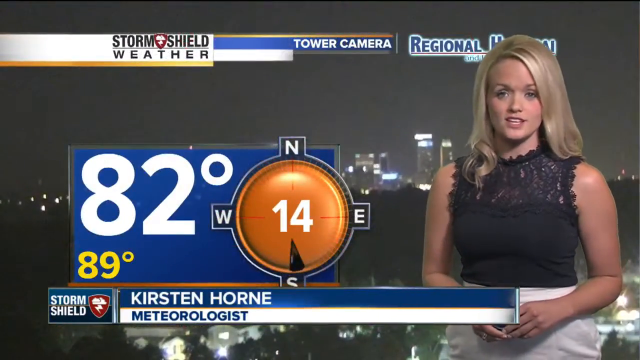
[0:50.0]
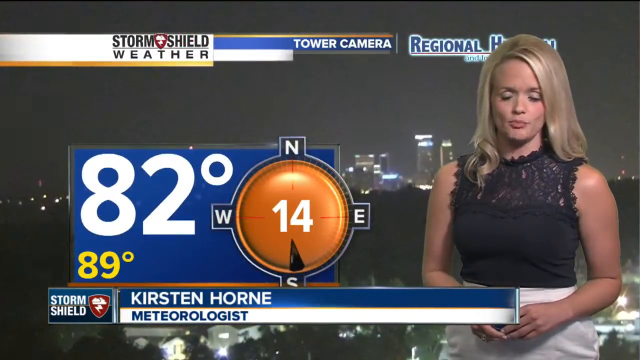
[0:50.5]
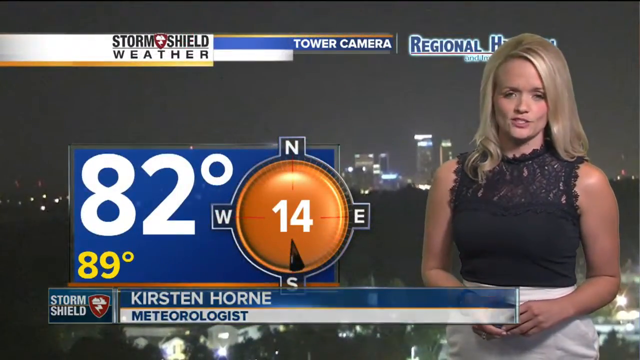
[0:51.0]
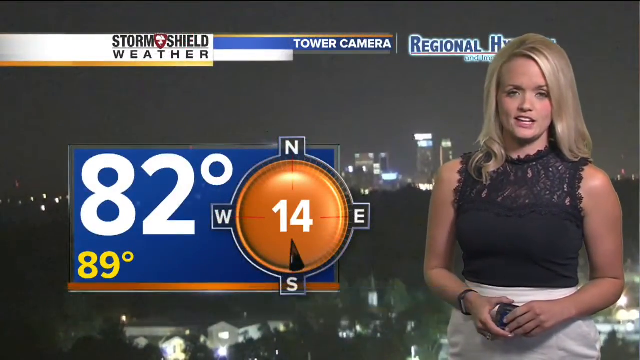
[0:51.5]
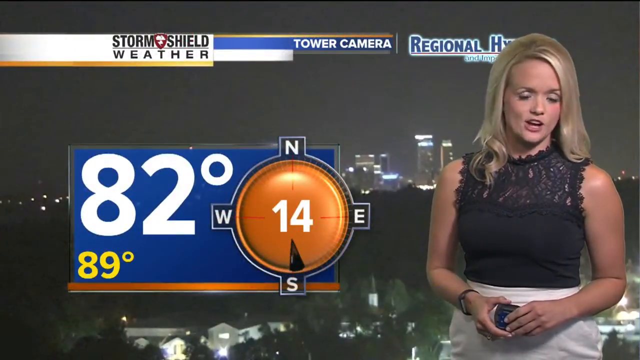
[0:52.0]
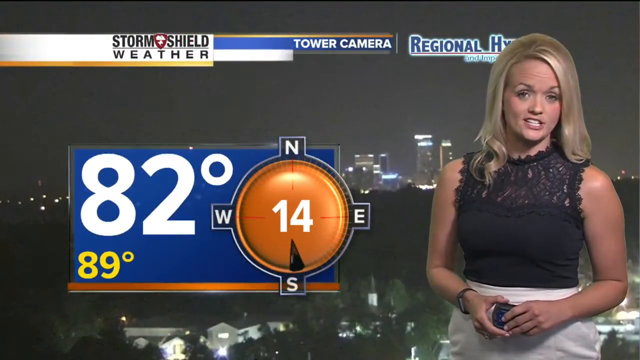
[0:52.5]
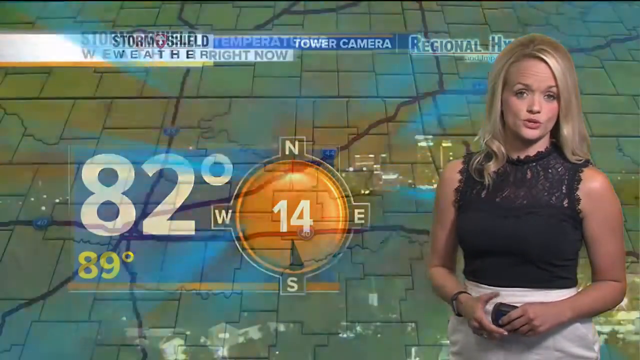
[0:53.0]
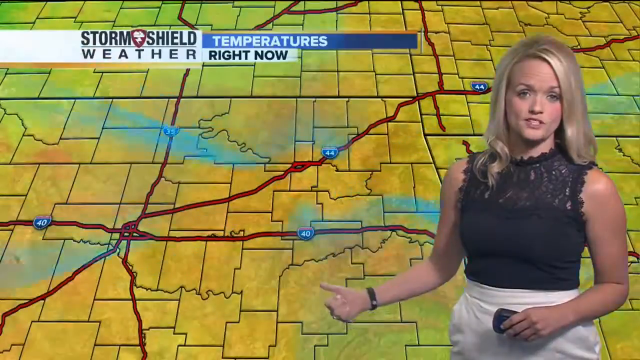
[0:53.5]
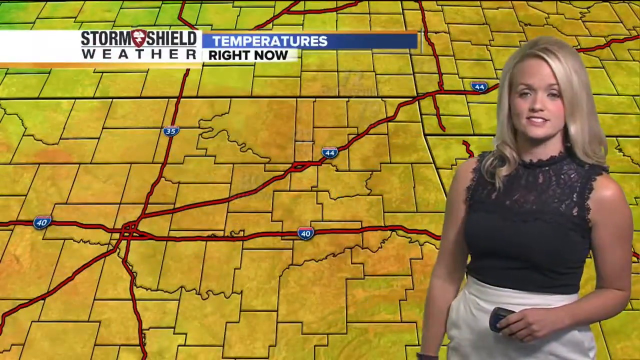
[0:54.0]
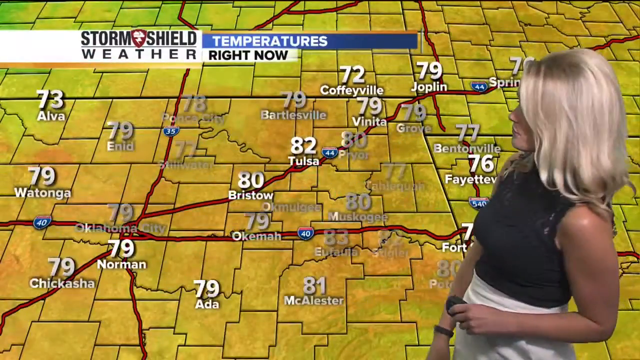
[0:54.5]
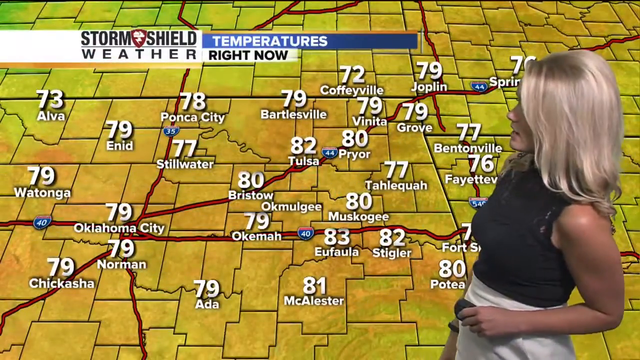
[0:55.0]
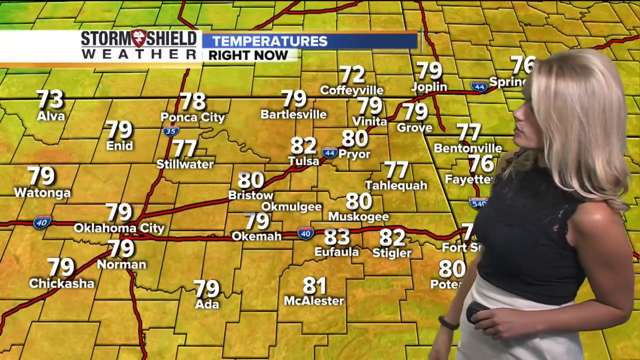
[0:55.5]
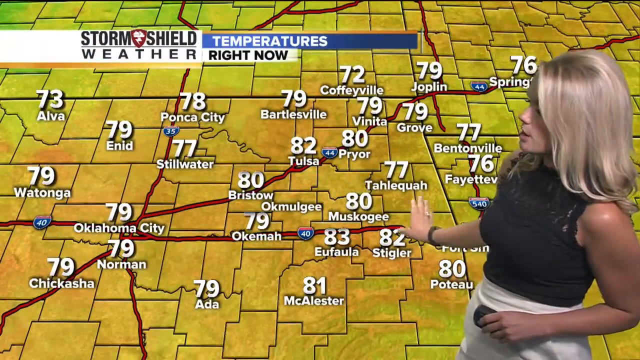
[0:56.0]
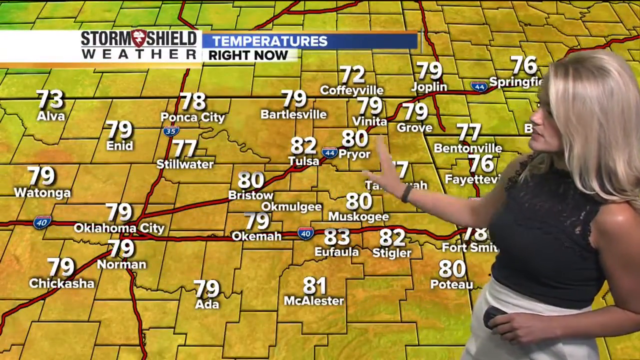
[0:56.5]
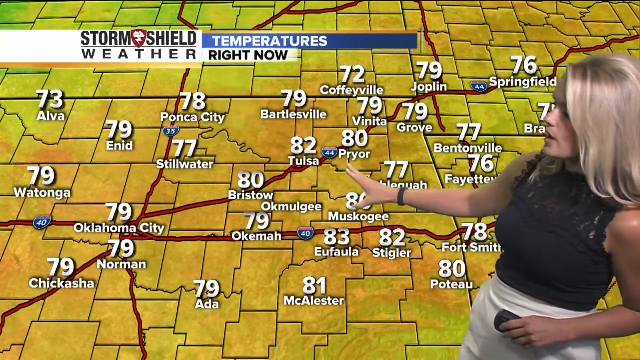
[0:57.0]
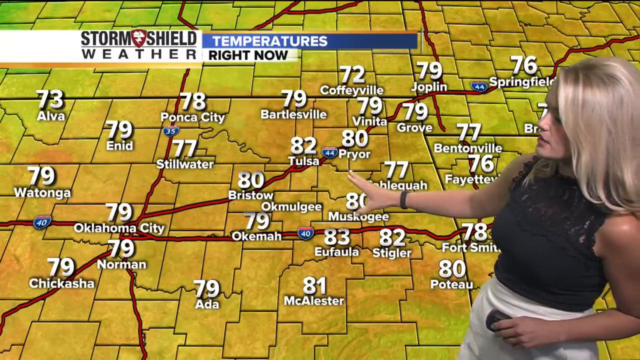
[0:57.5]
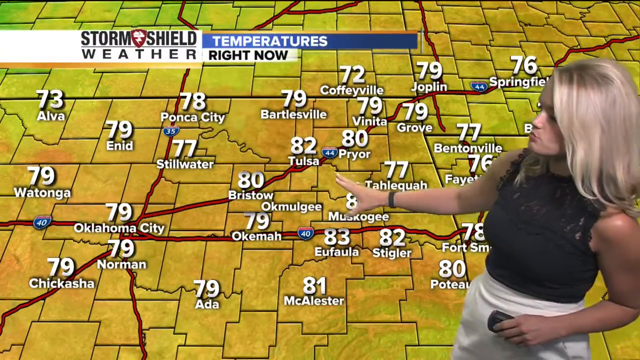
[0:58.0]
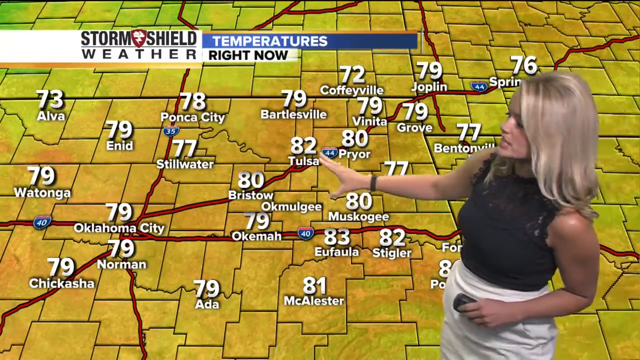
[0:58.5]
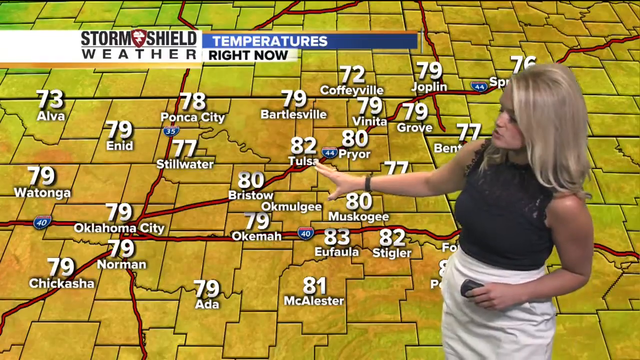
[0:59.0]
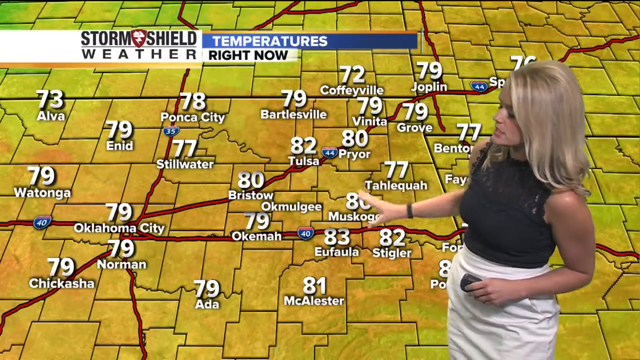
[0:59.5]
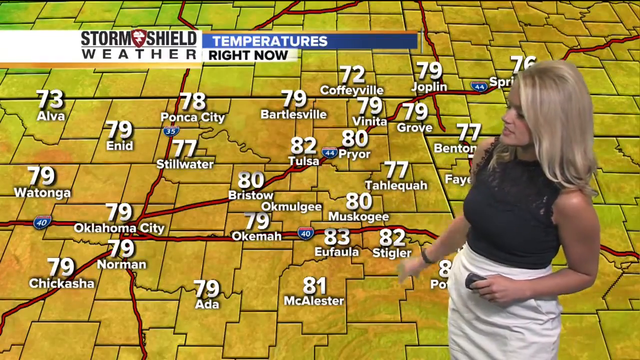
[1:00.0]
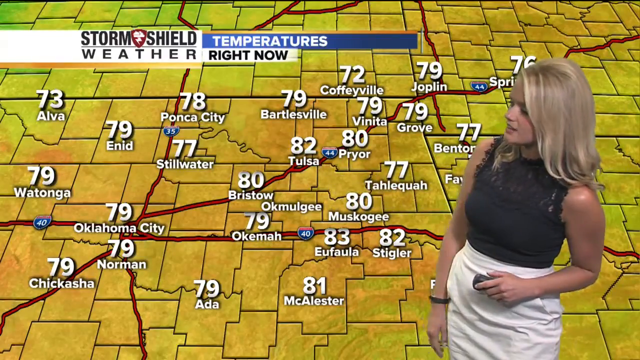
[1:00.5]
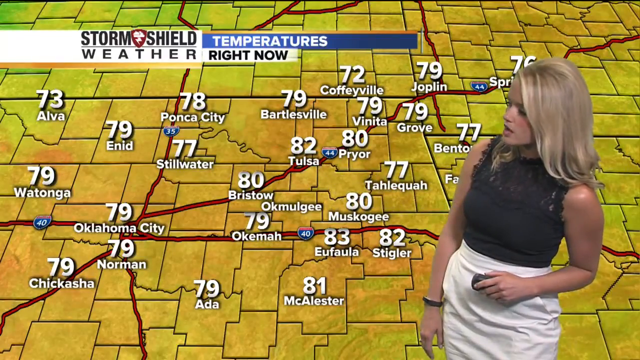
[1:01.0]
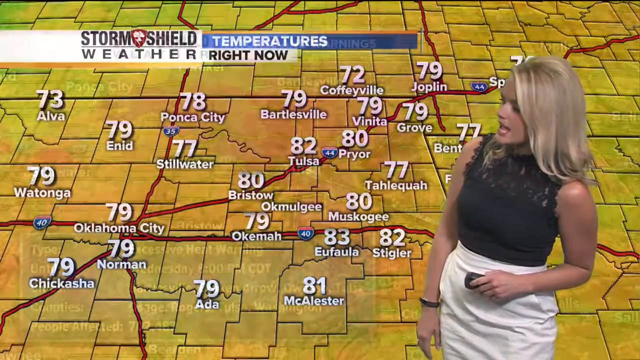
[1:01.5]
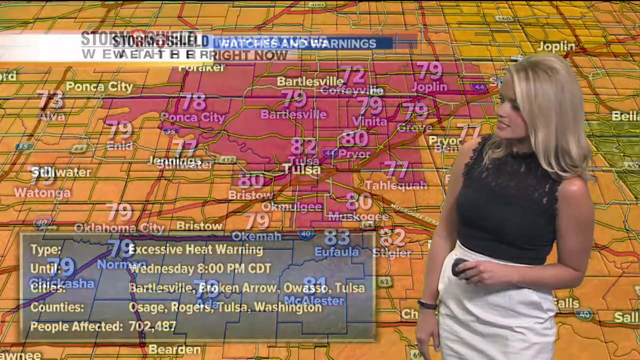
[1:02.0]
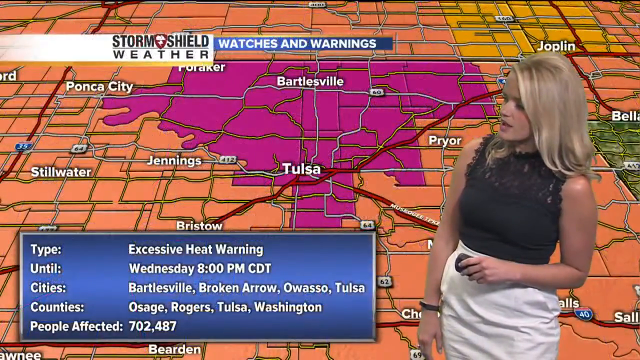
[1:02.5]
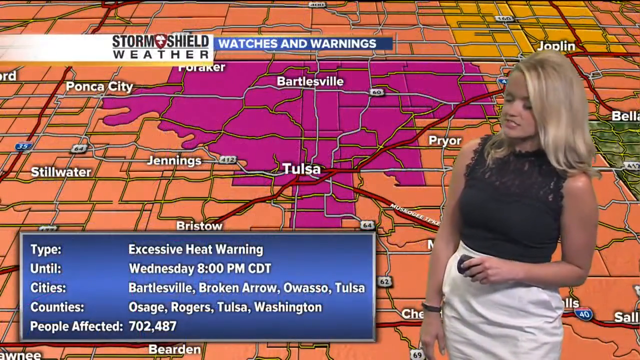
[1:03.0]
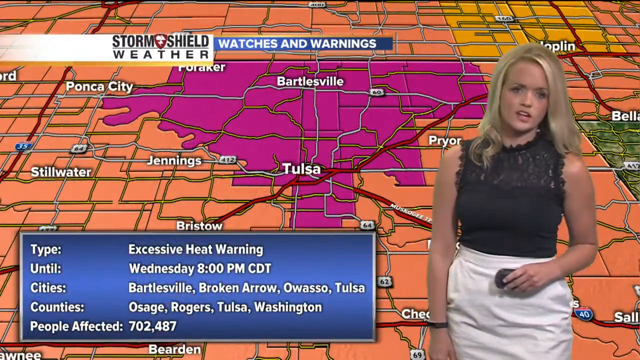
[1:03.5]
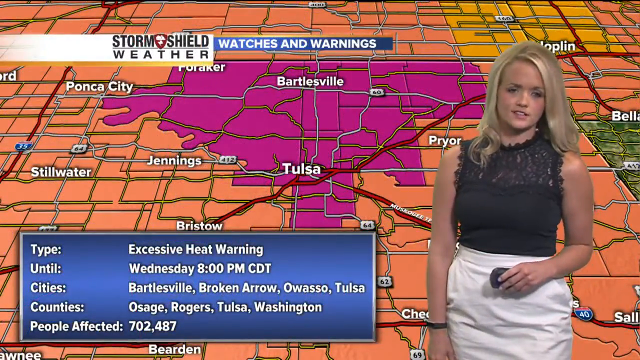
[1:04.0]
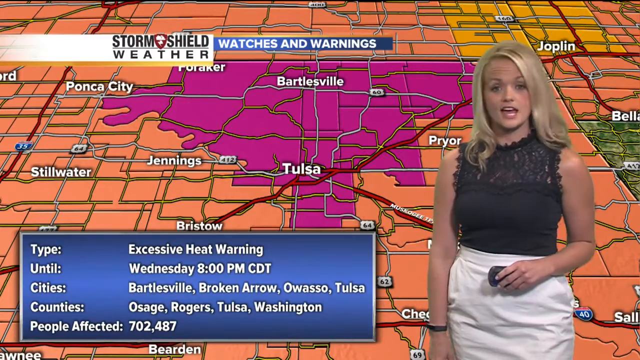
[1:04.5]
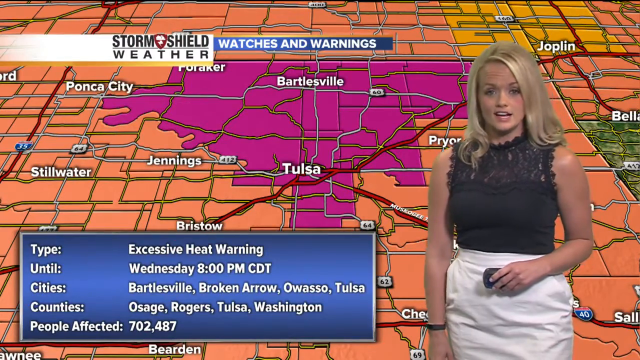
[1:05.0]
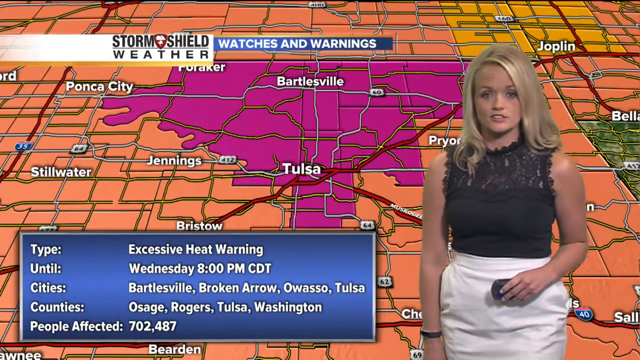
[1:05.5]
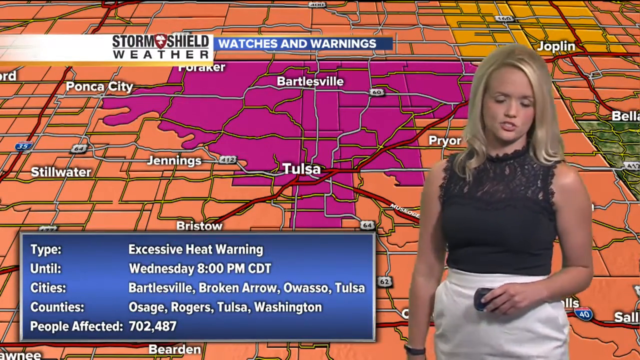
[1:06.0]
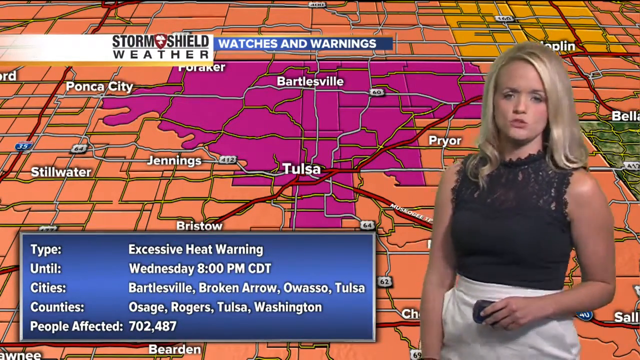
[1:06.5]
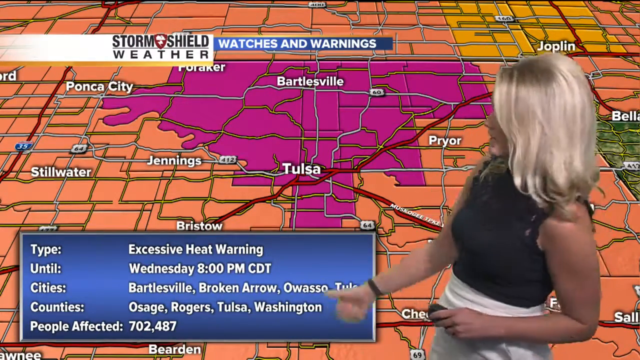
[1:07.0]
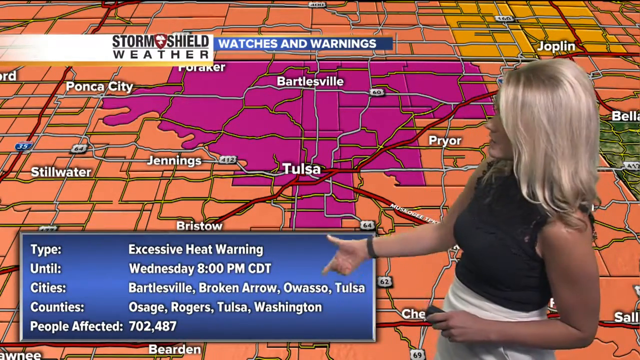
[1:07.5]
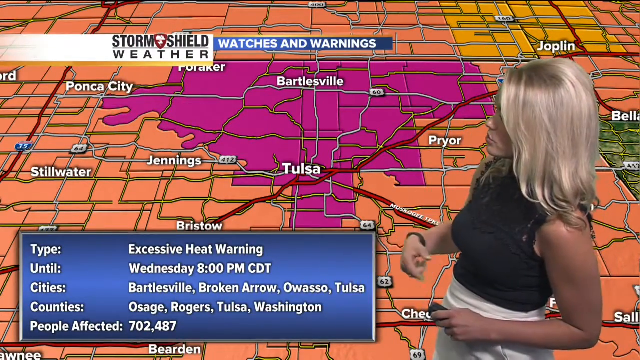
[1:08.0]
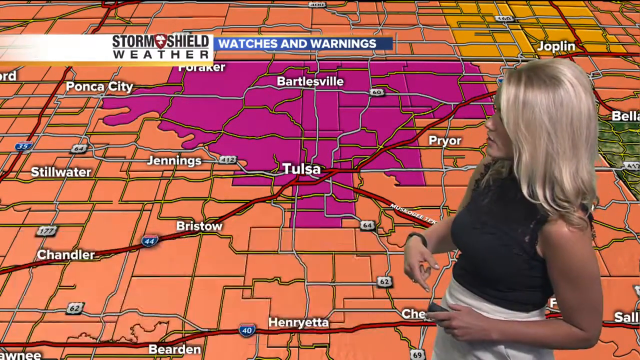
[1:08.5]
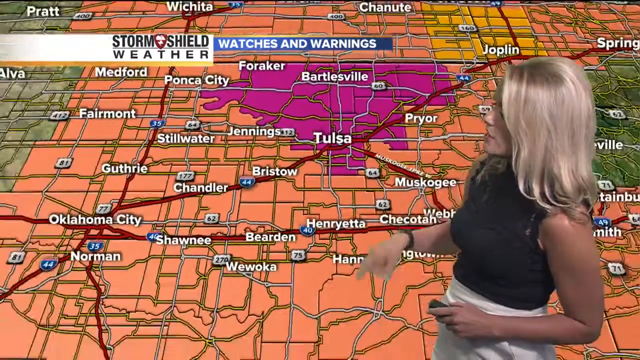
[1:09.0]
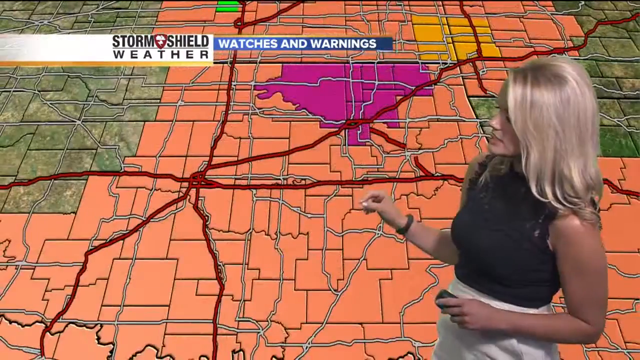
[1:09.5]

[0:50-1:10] The weather map is completely green and flat, like a rolled-out map. To the north is a storm system, a greenish mass pocked with red and orange indicating the severity of the different storm fronts, with the deepest parts in purple indicating severe storms. Red lines connecting the towns highlight the highways, and each has a blue shield with a red top and the highway number in white. There are also dark blues, light blues, light greens and dark greens. The severe parts of the storm are yellow, deeper in orange, deeper still red, and the very deepest purple. The newscaster, a blonde woman in a black blouse, comes into frame and stretches to a blue section of the map and then down to a blue rectangle describing the storm: a severe thunderstorm watch. According to the map, the storm is heading north or east. The storm front rolls over the map, mostly green with some yellow and orange boxes indicating a more severe storm. To the northeast, another storm is coming down with some fog. The temperature in town is shown as 82 degrees. For the next couple of days, the map turns kind of an orangish-yellow color with green at the top and a deep purple section in the center indicating an excessive heat warning.